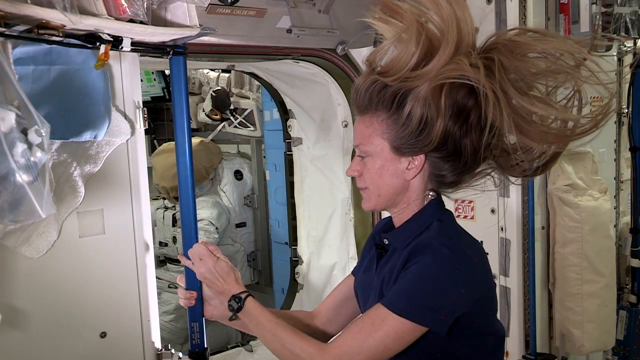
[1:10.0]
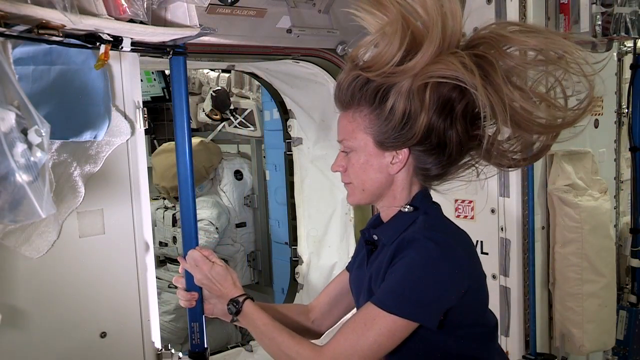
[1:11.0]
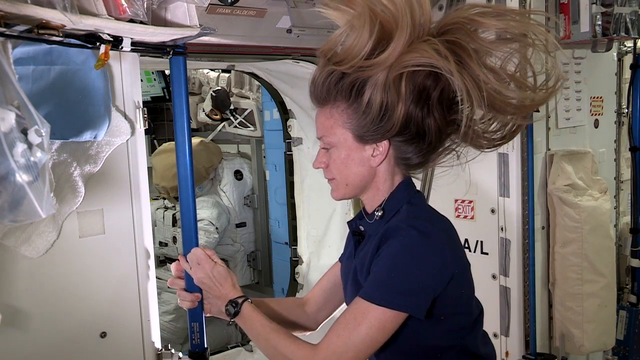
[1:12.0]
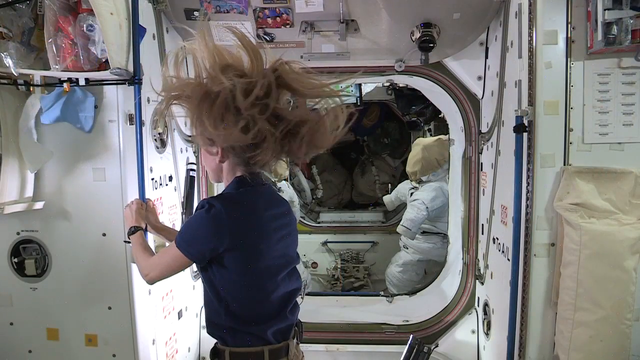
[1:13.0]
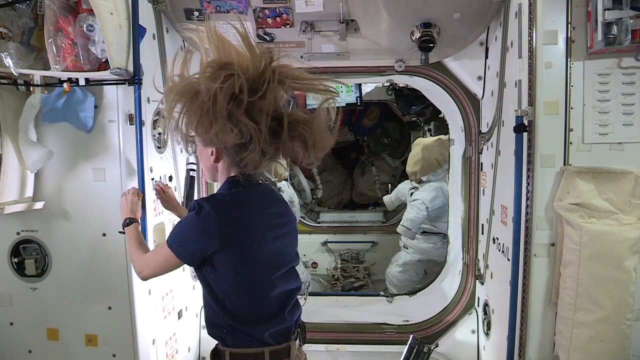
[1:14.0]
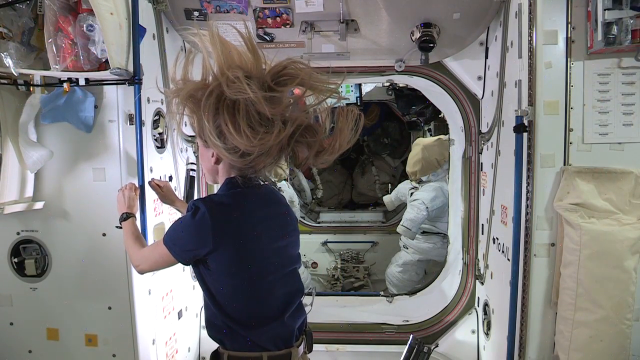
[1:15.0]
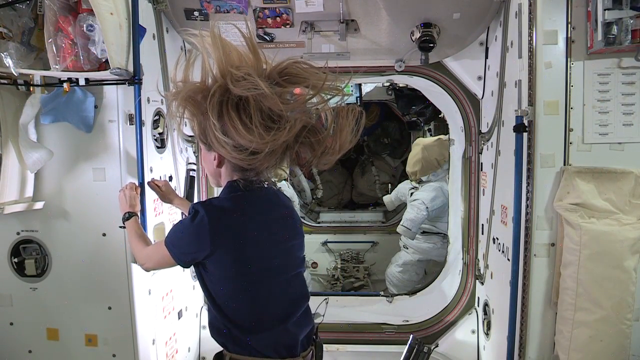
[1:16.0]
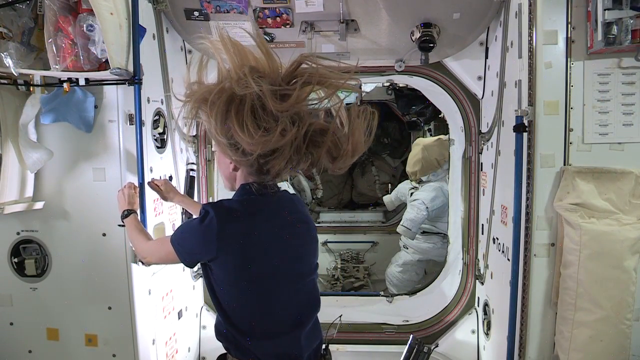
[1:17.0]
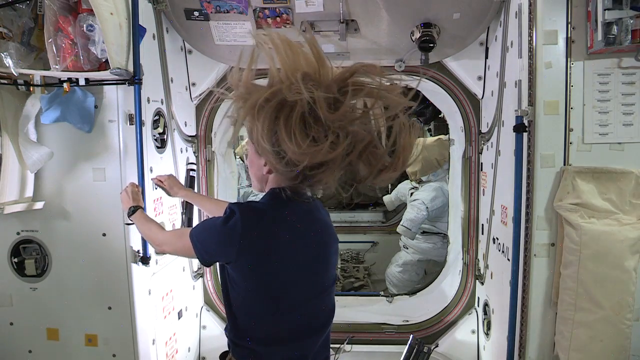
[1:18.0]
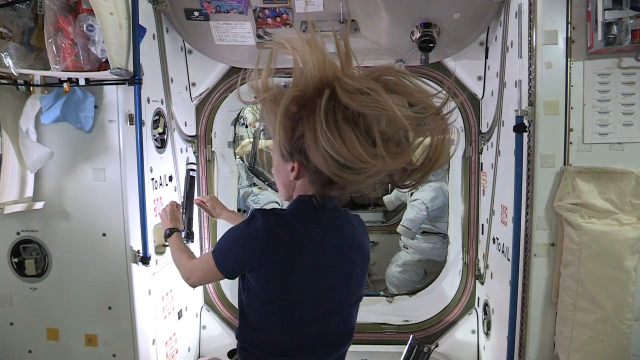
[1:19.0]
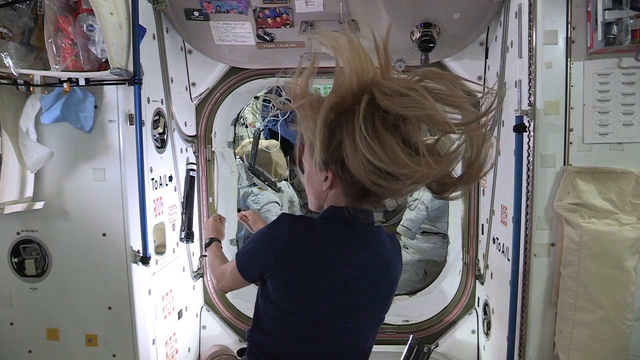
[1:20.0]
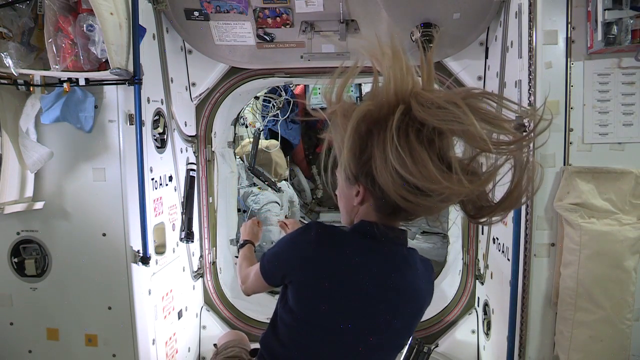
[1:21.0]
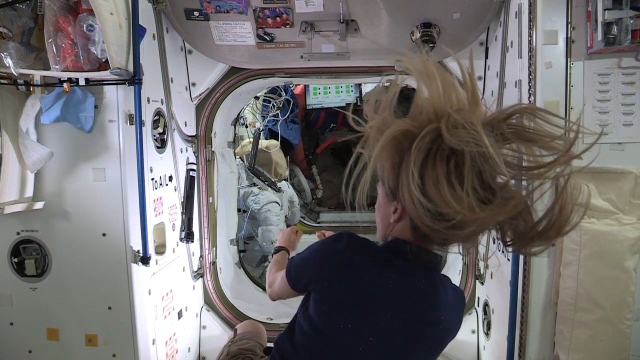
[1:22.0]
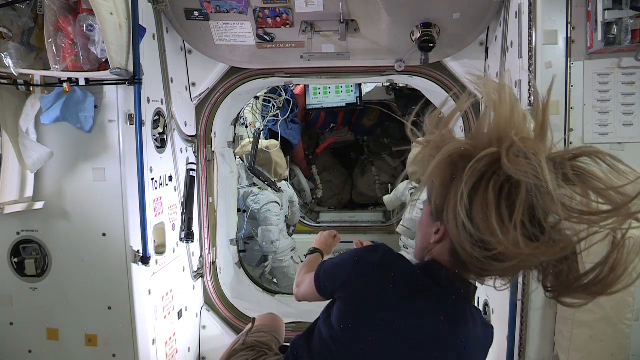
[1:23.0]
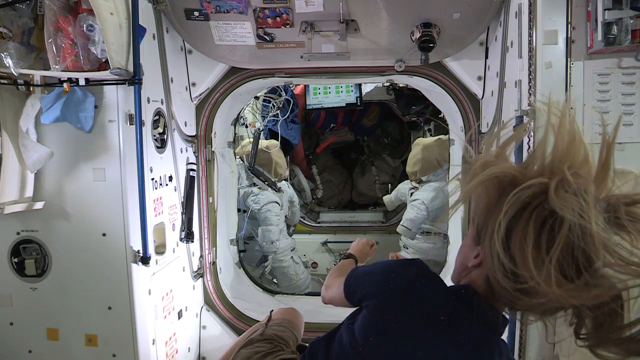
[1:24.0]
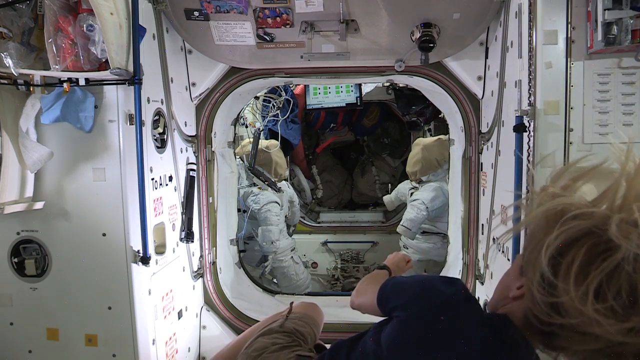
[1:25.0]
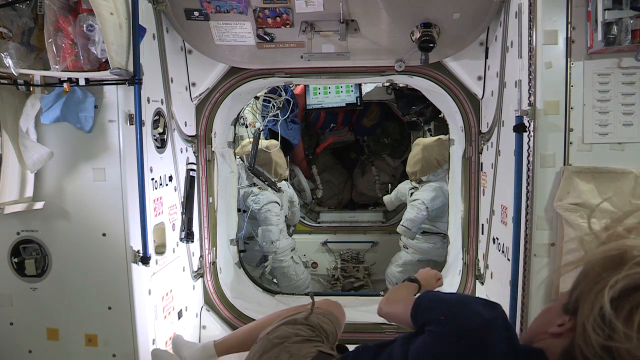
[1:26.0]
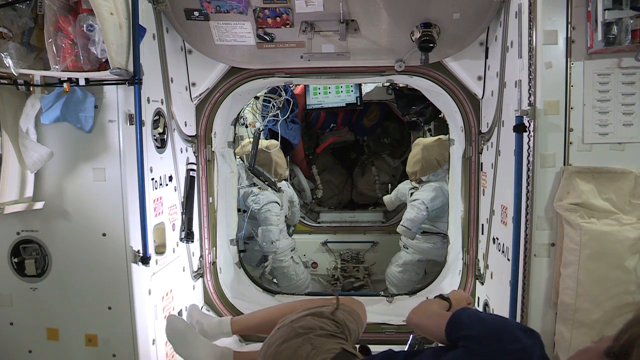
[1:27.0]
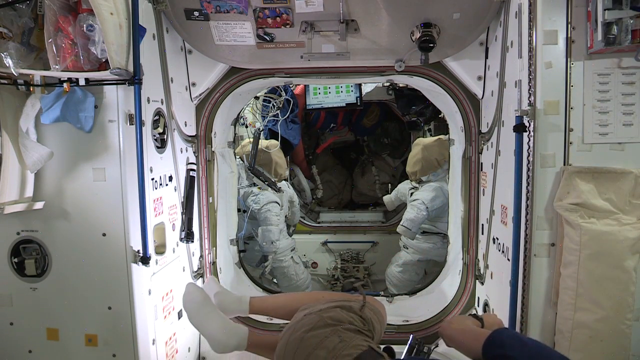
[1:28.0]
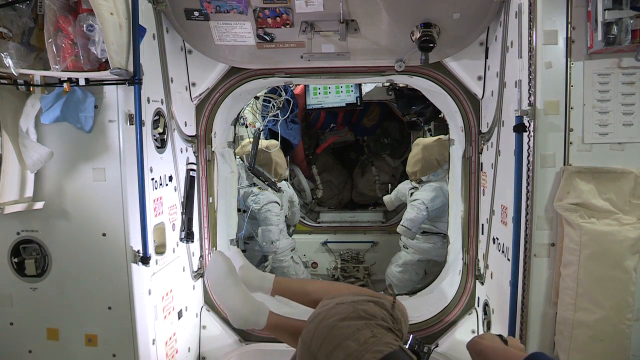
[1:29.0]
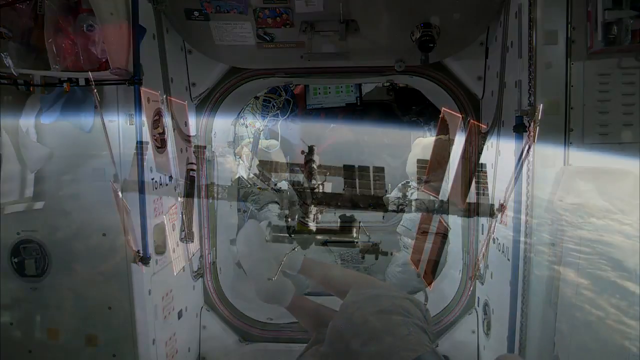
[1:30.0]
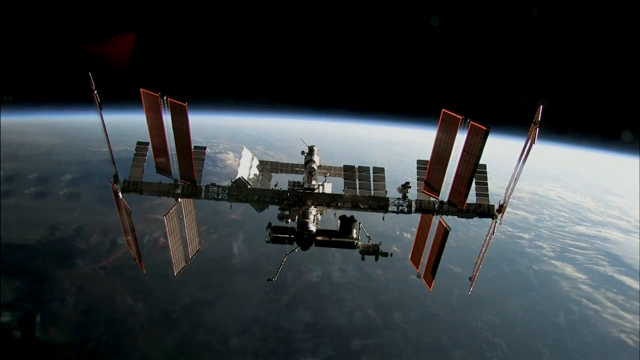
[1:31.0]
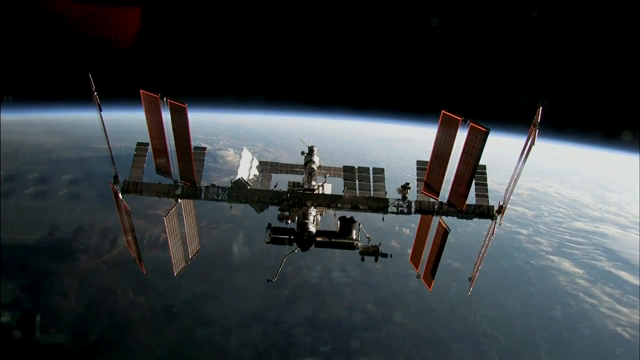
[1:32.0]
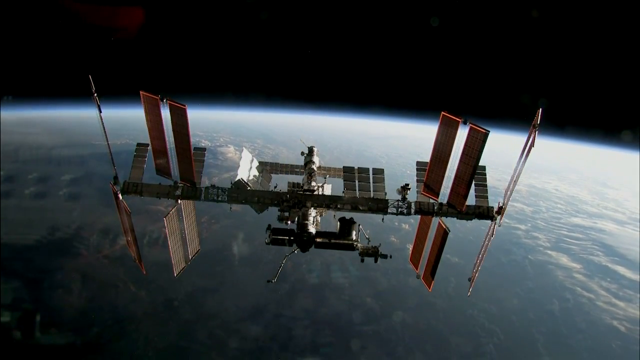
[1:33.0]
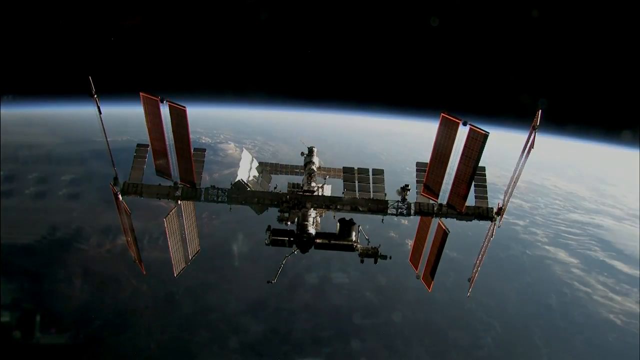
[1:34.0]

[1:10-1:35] The blonde-haired woman faces left, reaching out in front of her with her elbows a little bent. A blue pole is in front of her and she fiddles with it; her necklace floats up around her neck area, and her fingers mess with something as she looks forward. The video cuts to a shot from behind, kind of angled from her right, as she keeps messing with something; her hair floats in all kinds of directions. A spacesuit is visible in front of her through a little hole to the right. She moves back a little and her hair kind of floats back with her. She pushes off with her hands, hands still out in front of her, and slowly floats to the right, kind of tilting to the right until her head is about parallel, then goes off the bottom of the screen; the side of her legs is just visible as her feet rotate up from the left. The video returns to the aerial shot of the satellite, with the blue and white Earth covering the bottom half and dark space in the top half, as the satellite moves ever so slowly down. The image then slowly fades to black.